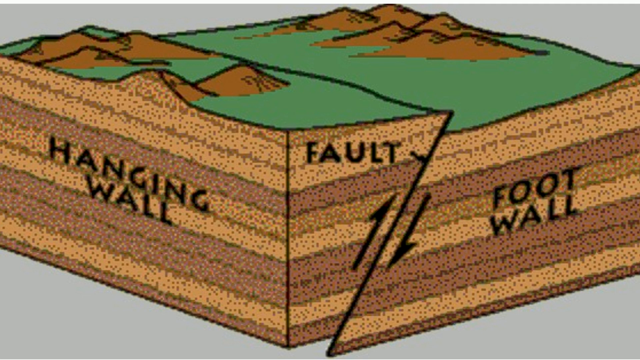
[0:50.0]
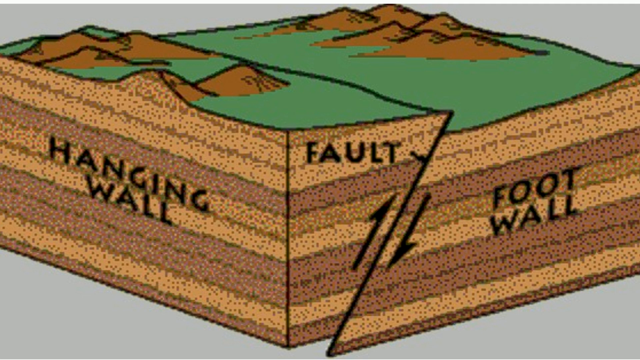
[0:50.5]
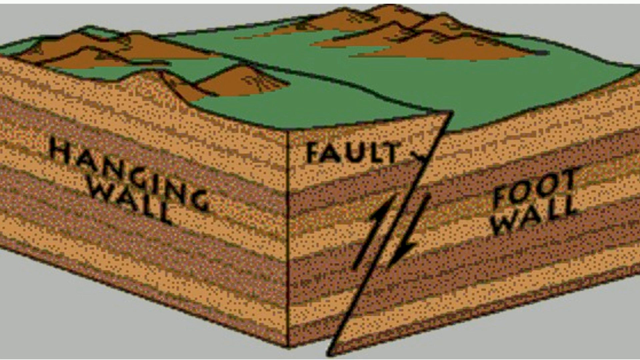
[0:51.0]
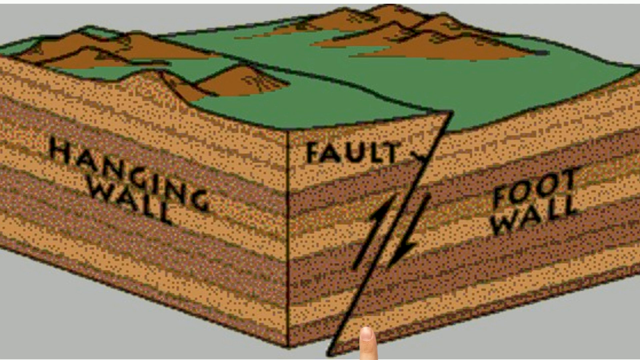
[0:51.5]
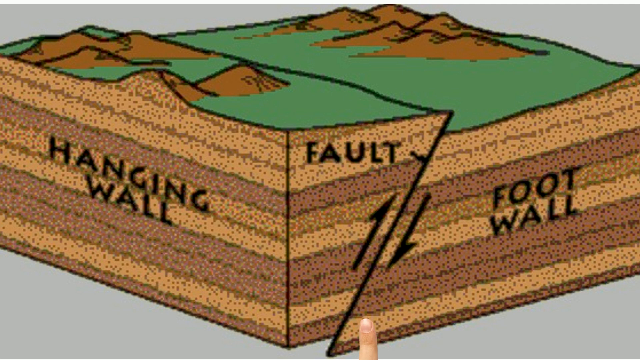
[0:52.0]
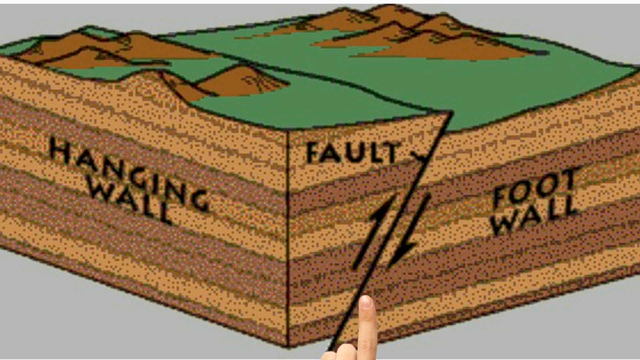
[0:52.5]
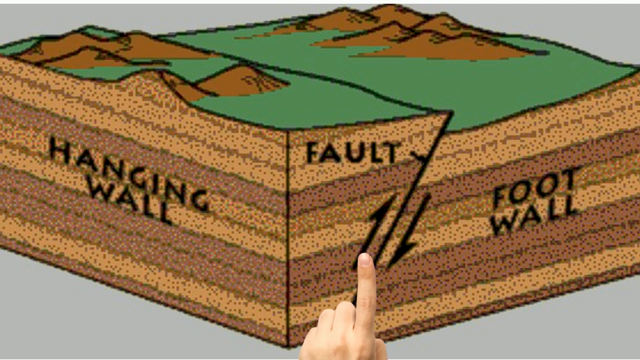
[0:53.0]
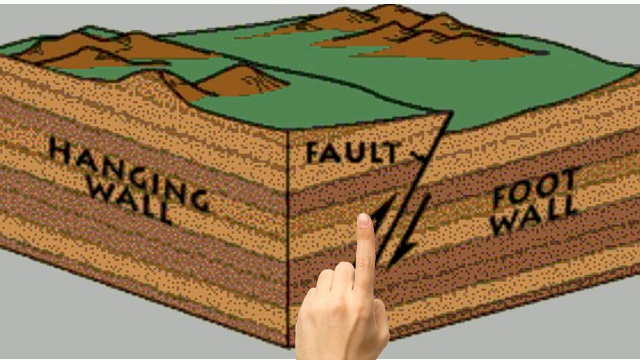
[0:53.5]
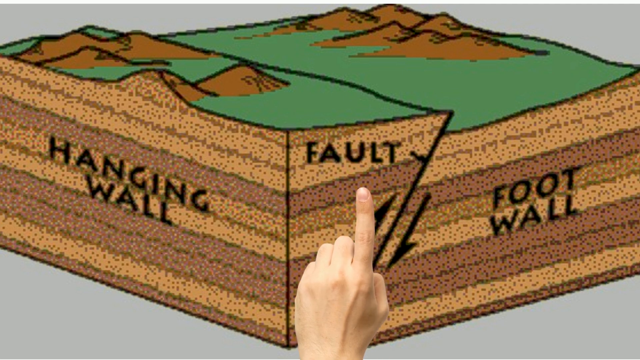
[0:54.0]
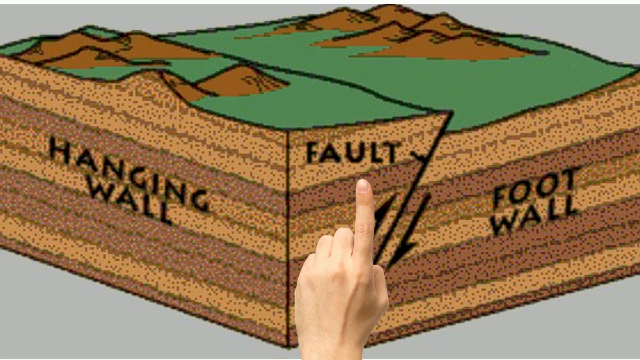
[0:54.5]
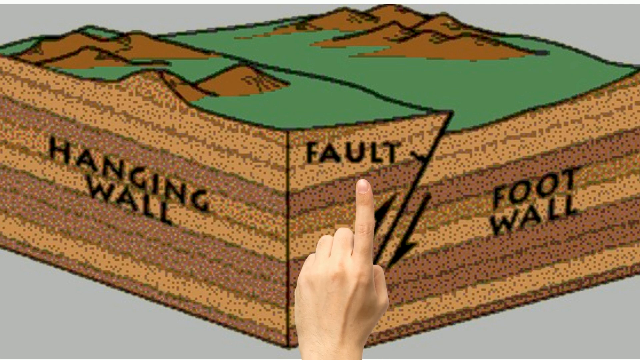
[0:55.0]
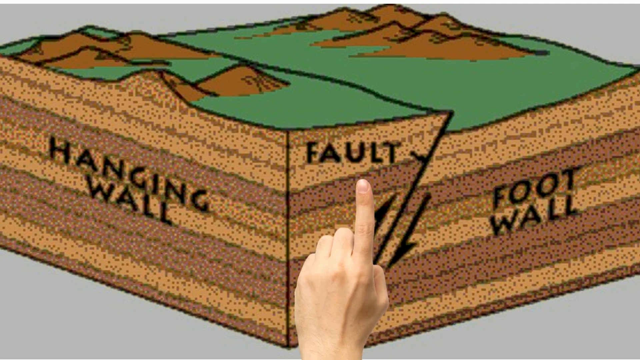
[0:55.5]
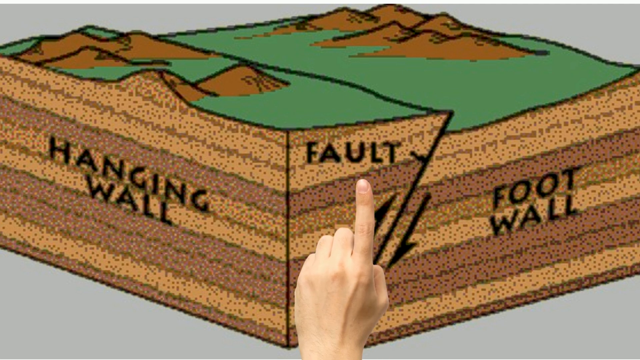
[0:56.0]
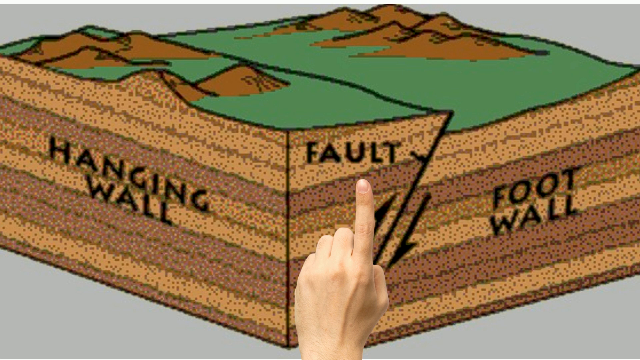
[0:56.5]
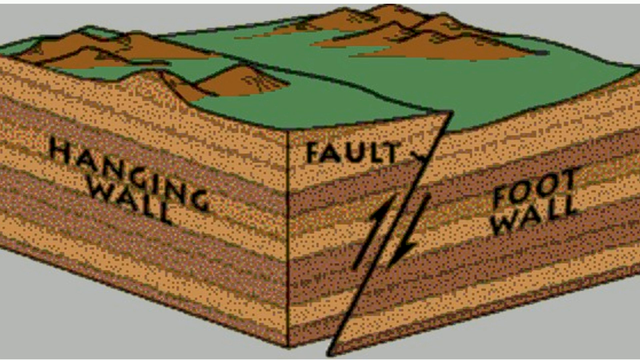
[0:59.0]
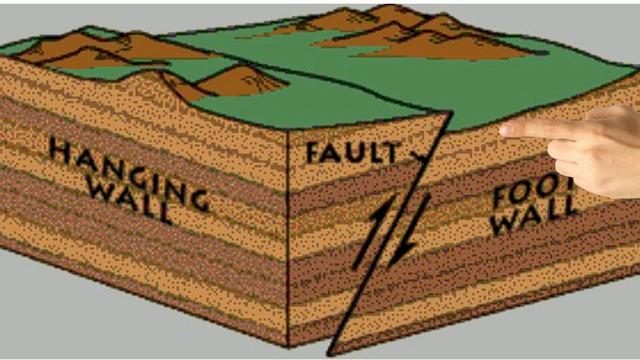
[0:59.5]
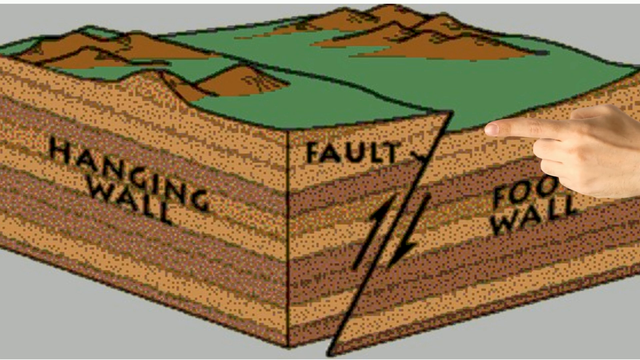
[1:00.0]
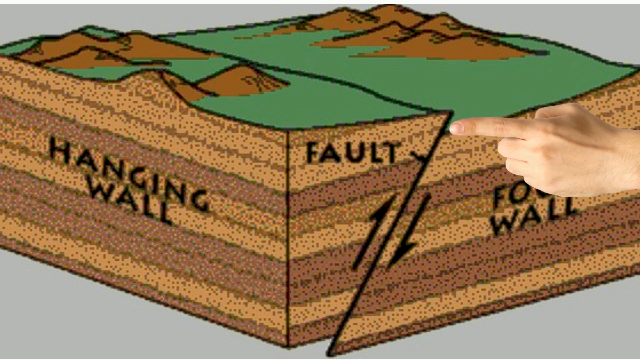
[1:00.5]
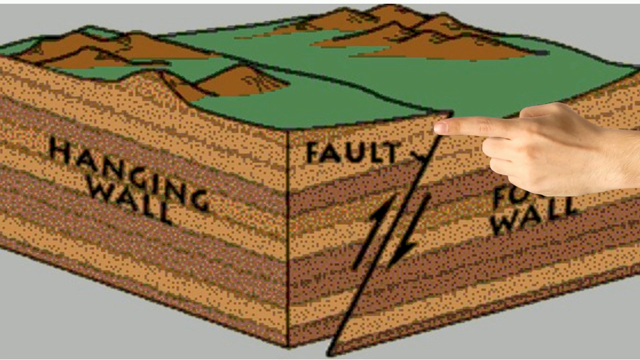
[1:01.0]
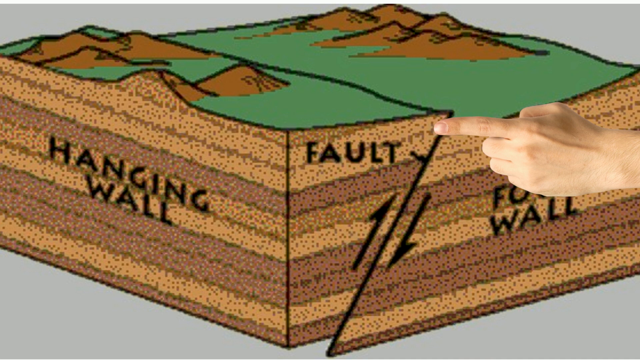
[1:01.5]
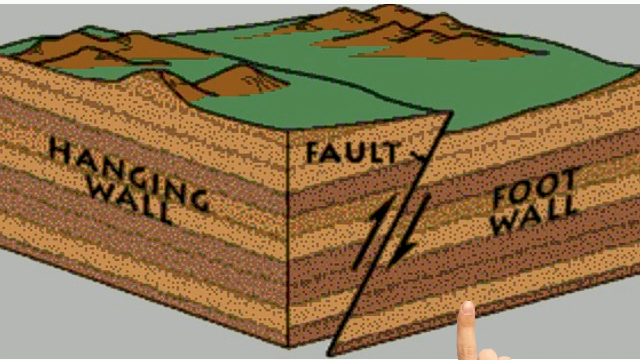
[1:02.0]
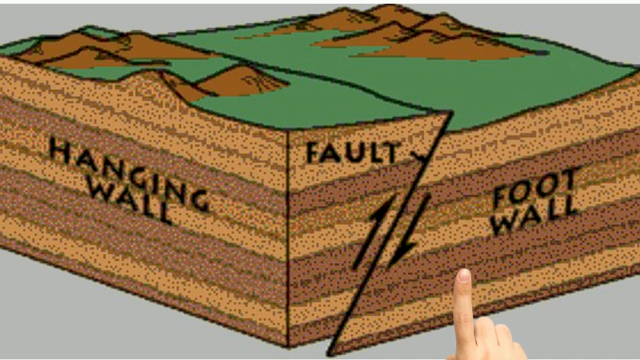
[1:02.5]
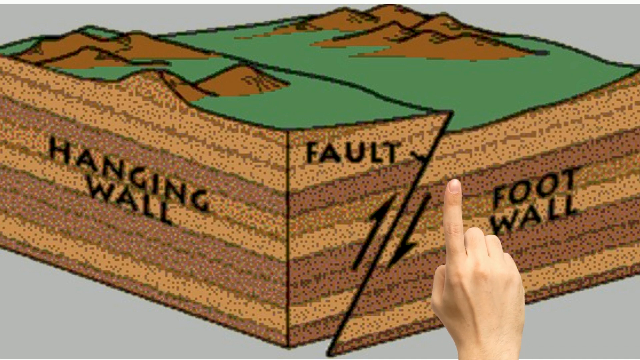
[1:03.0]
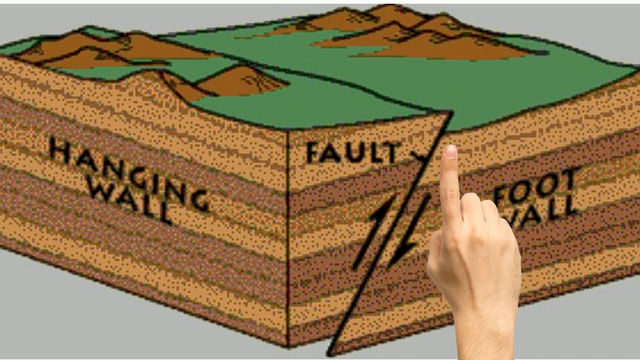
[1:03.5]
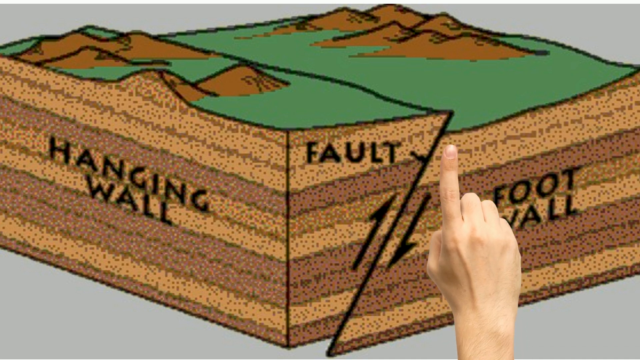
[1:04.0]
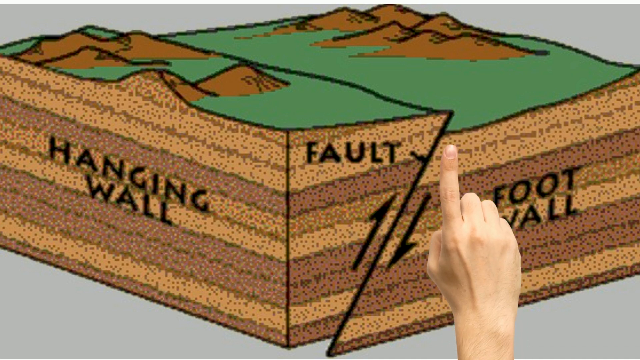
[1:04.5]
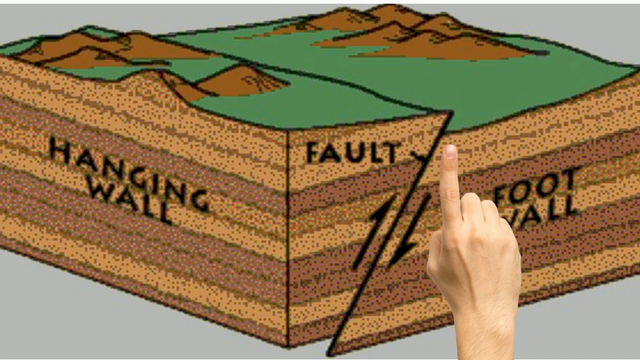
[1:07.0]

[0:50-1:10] A planet appears, then is shown with gold lines on it as the continents begin to separate. After the separation, the African continent is shown prominently. A white man in his 20s appears; he seems very distressed and then breaks a pencil. Rocks and their faults follow, then different illustrations of the types of faults: the normal fault, the reverse fault, and the strike-slip fault, showing how all three work. Examples of a reverse fault and a strike-slip fault follow. The video ends with a cartoon illustration that thanks the viewer for watching and encourages them to share and subscribe.